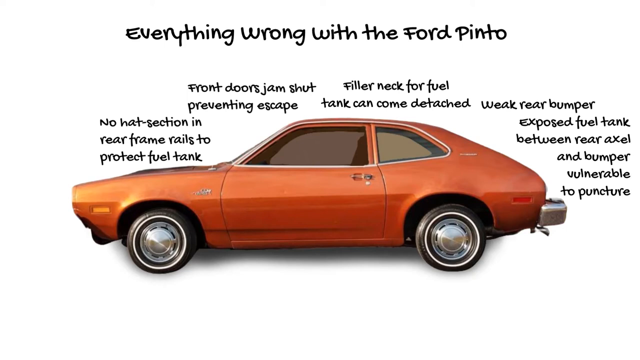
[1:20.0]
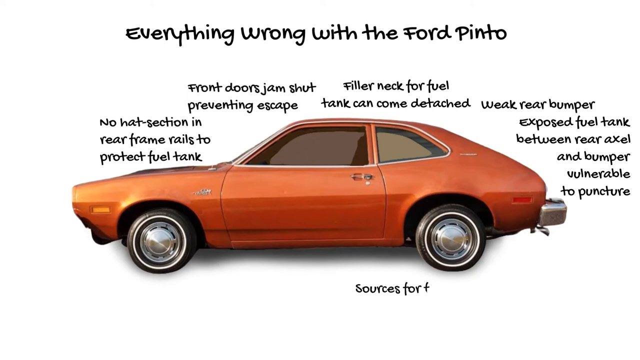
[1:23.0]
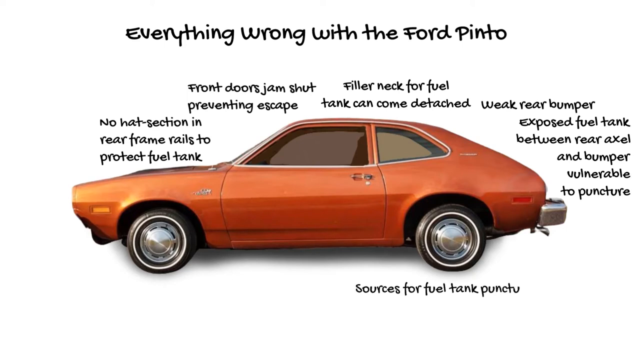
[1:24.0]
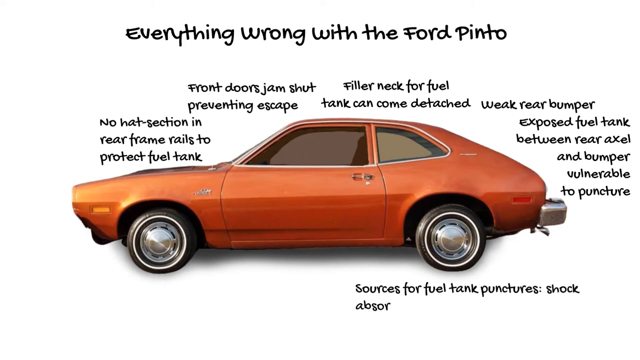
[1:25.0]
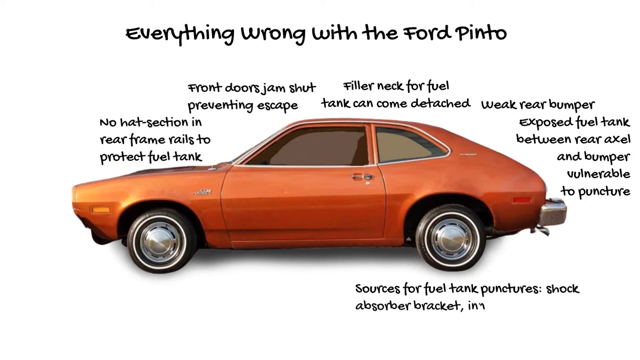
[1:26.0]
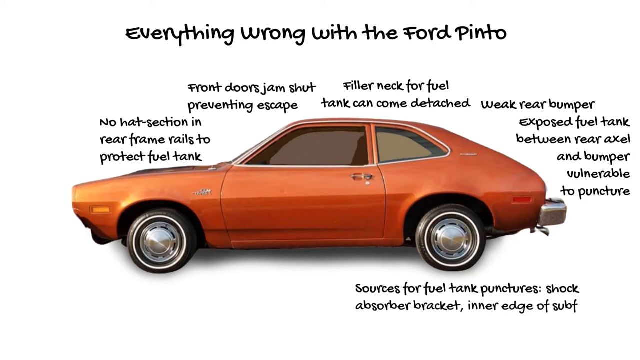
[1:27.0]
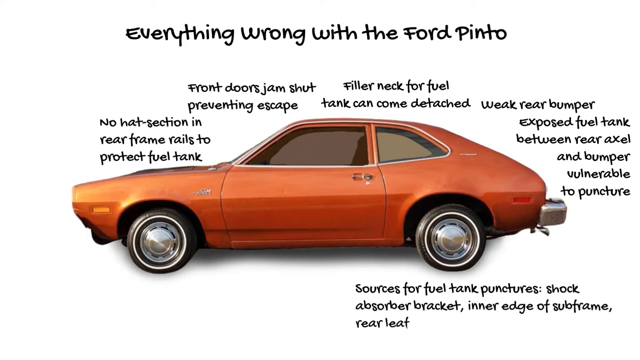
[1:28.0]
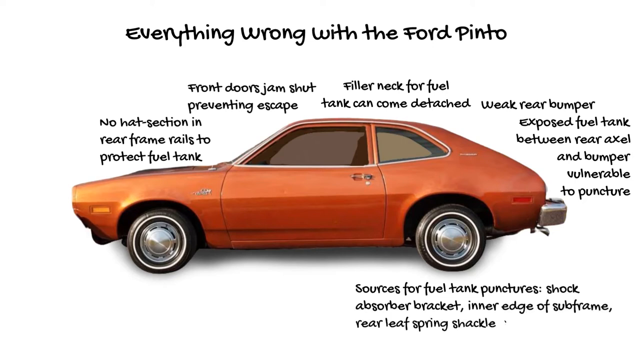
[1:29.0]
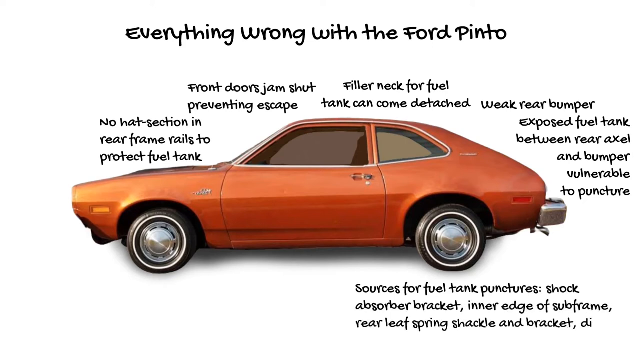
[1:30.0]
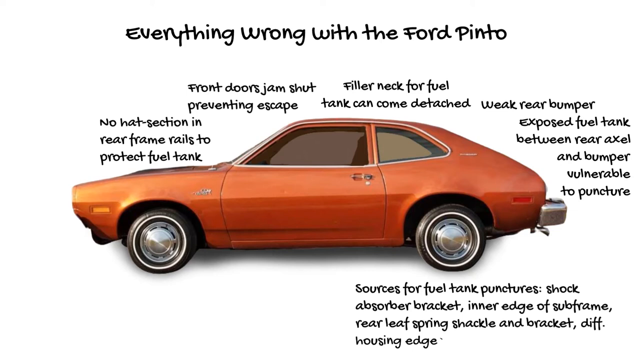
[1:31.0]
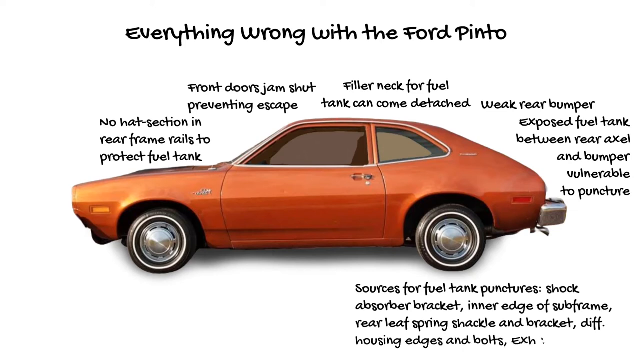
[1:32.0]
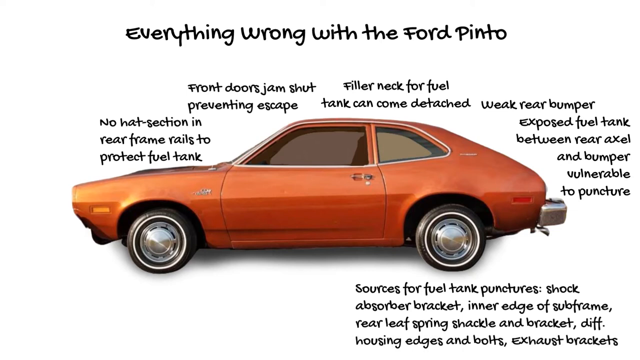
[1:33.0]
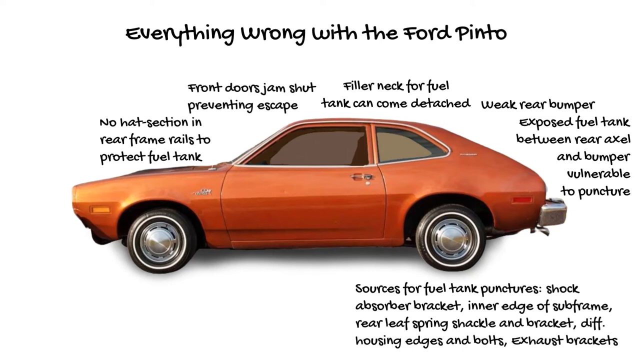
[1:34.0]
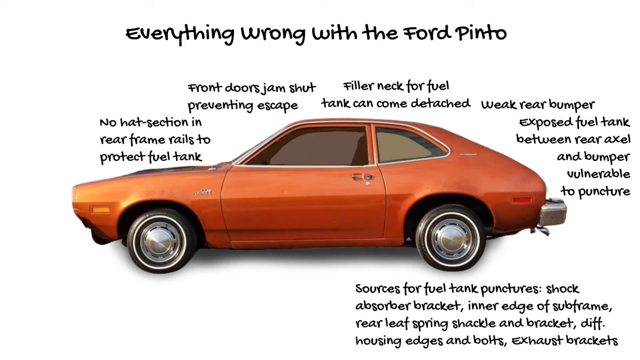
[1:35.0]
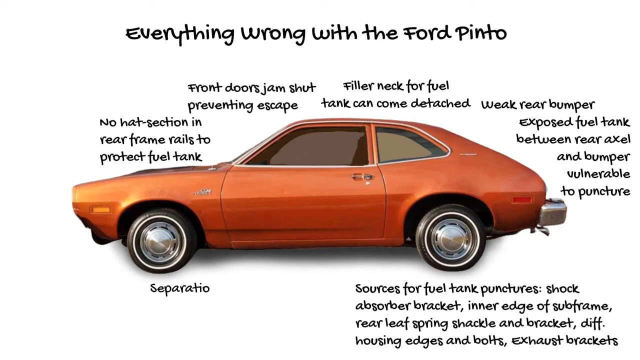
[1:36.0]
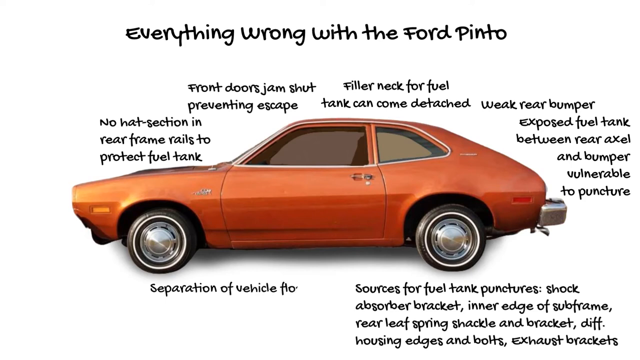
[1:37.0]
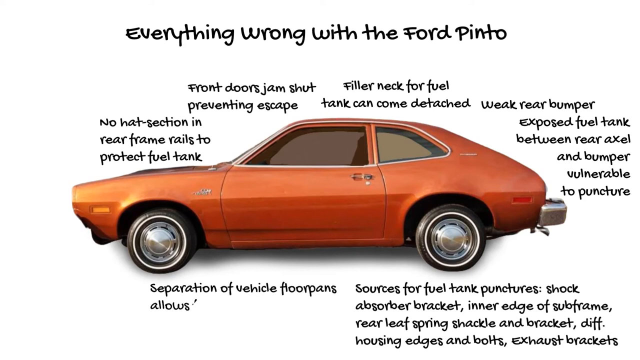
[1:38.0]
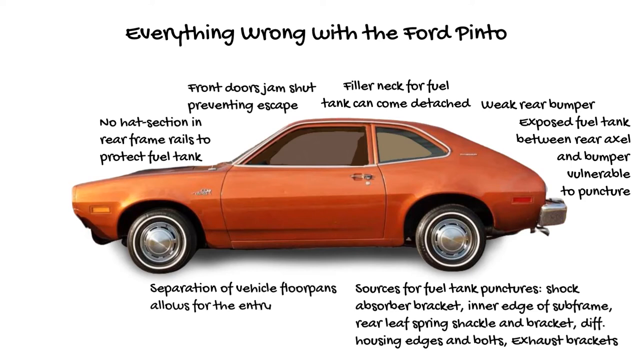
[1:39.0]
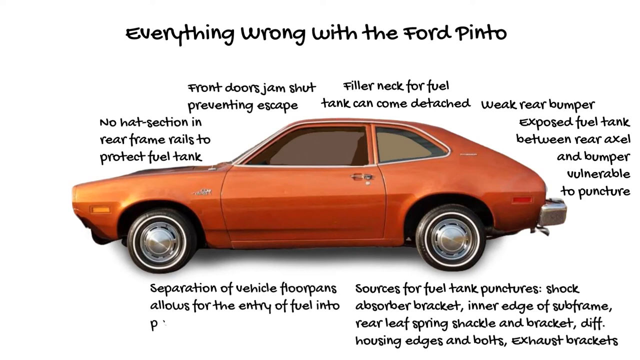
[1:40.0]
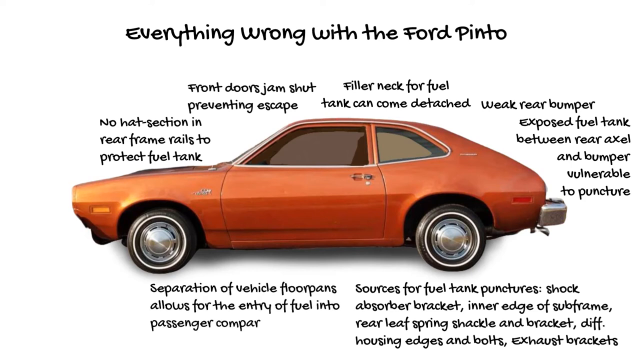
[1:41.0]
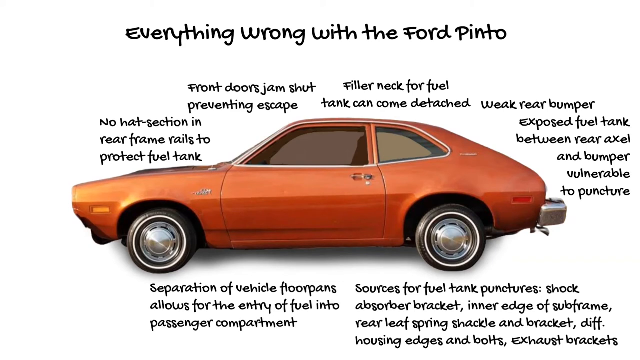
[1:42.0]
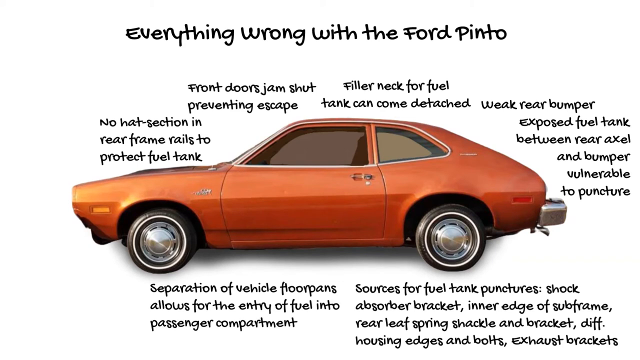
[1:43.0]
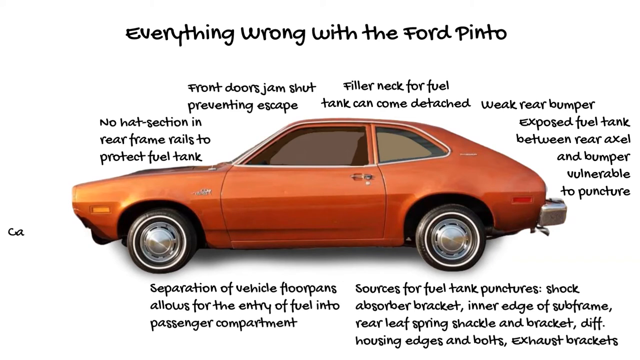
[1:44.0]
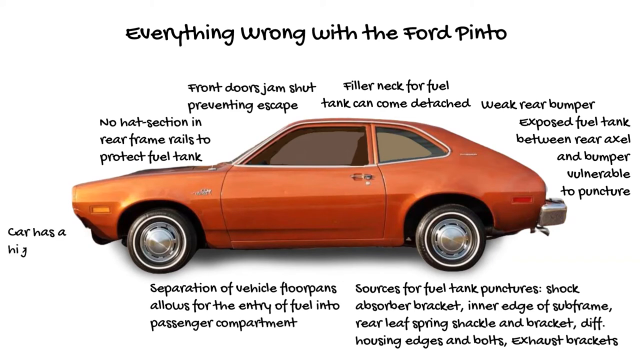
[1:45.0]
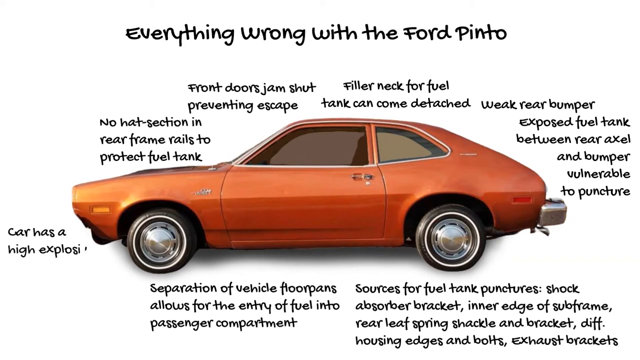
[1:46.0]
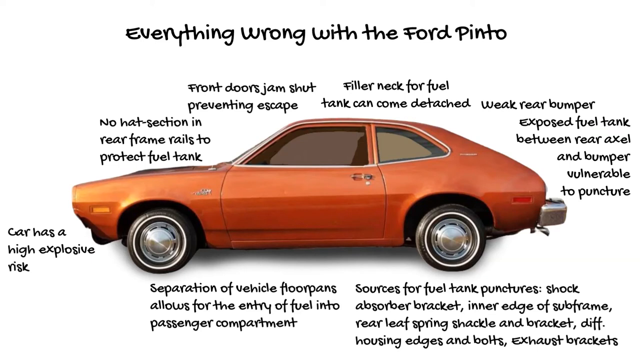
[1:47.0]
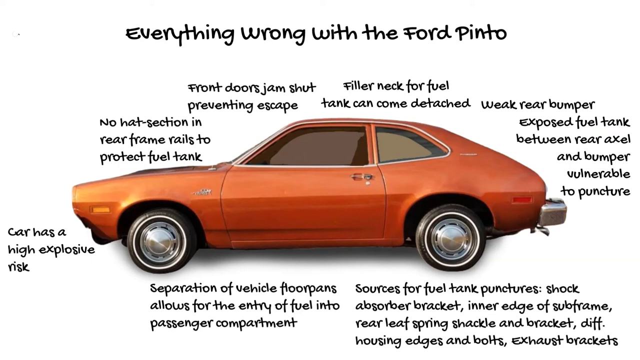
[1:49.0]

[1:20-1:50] The words "everything wrong with the Ford Pinto" run across the top of the screen in black letters, with an orange Ford Pinto shown underneath in a side view of the driver's side. Above the hood are the words "no hatch section in rear frame rails to protect fuel tank." Next to this, above the windshield, are the words "front doors jam shut preventing escape." Above the roof is "filler neck for fuel tank can come detached." Next, words appear over the rear end: "weak rear bumper exposed fuel tank between rear axle and bumper vulnerable to puncture." Then words appear under the vehicle near the rear driver's side tire: "sources for fuel tank punctures, shock absorber bracket, inner edge of the strut frame, rear leaf spring shackle, and bracket differential." Under the front driver's side tire are the words "separation of vehicle floor pans allows for the entry of fuel into the passenger compartment," and underneath the front bumper, "car has a high explosive risk."